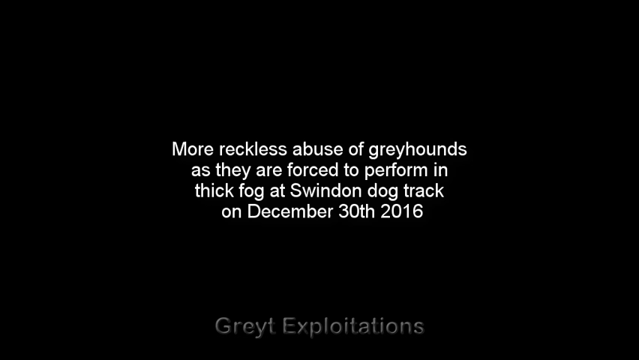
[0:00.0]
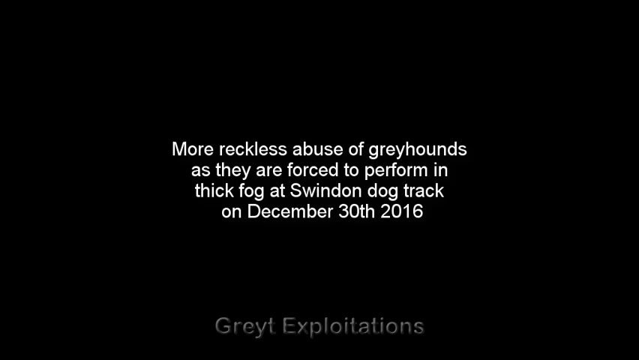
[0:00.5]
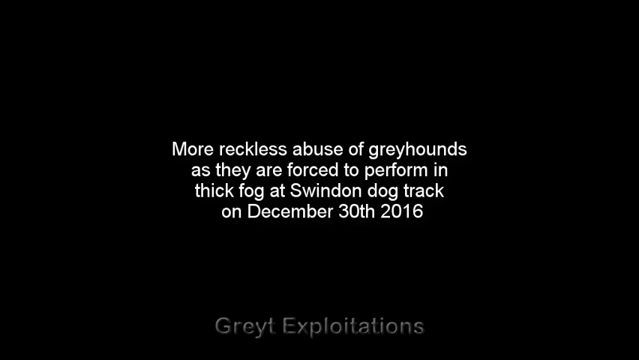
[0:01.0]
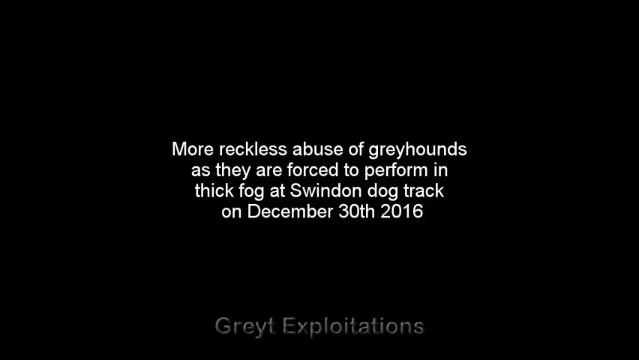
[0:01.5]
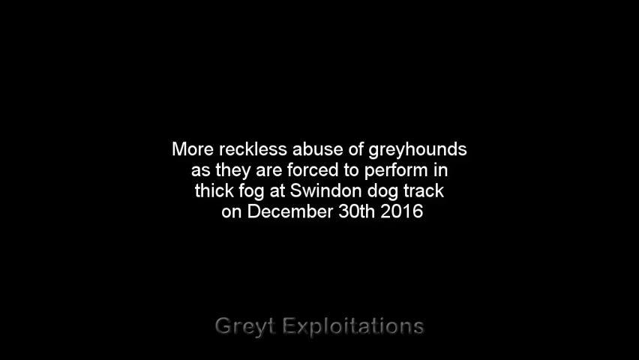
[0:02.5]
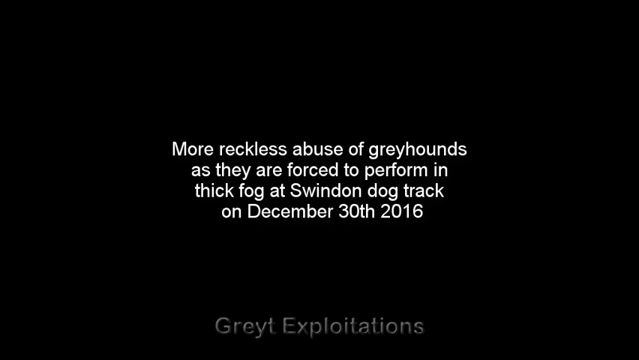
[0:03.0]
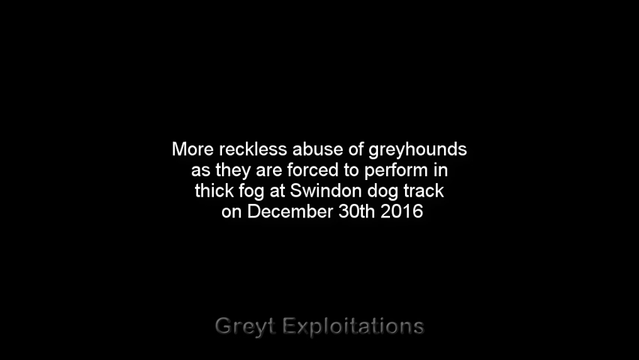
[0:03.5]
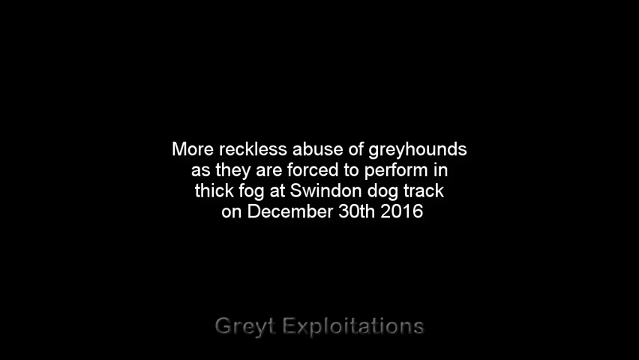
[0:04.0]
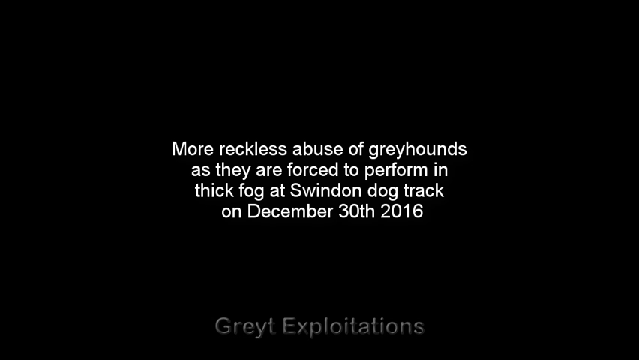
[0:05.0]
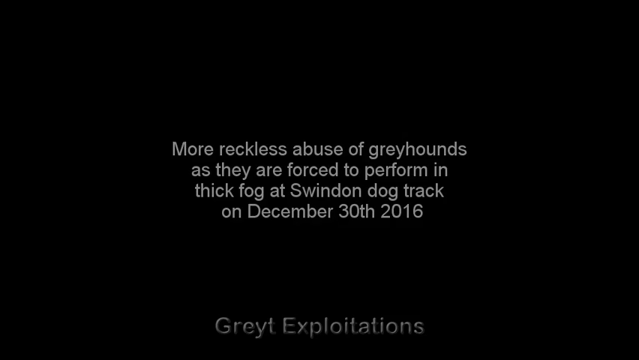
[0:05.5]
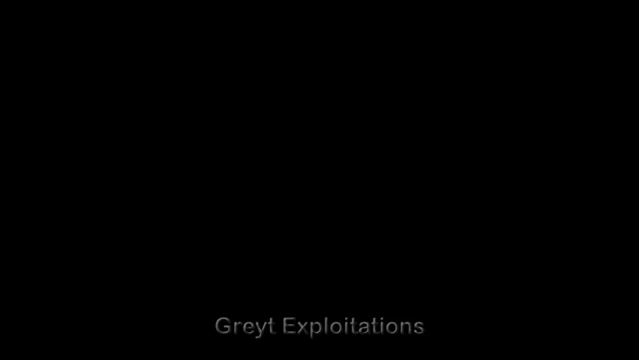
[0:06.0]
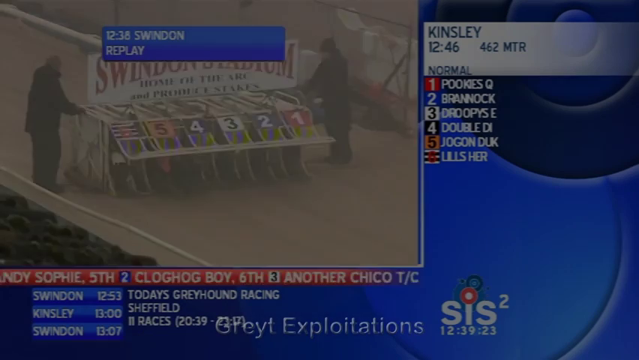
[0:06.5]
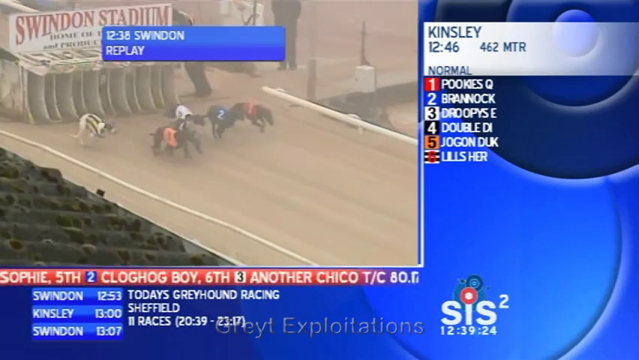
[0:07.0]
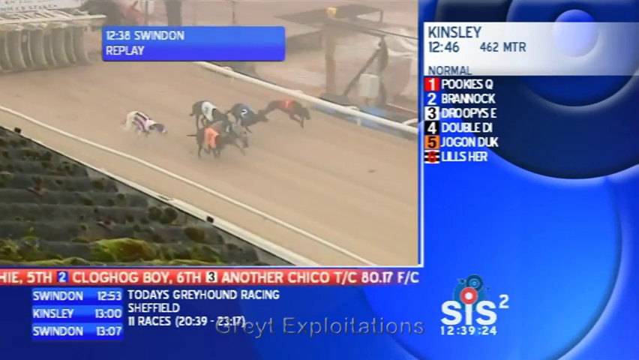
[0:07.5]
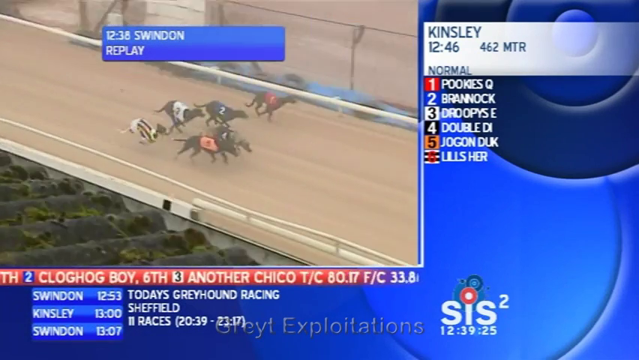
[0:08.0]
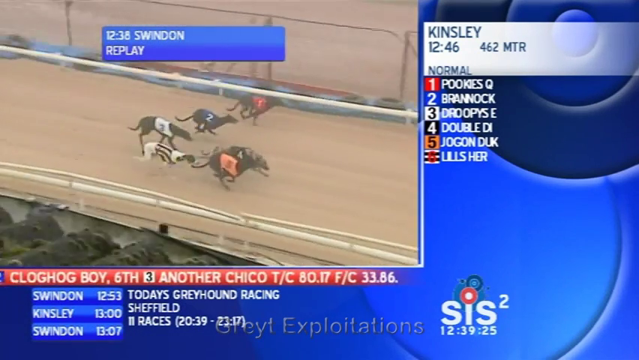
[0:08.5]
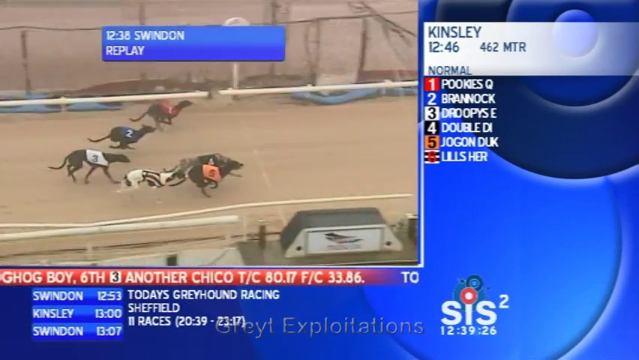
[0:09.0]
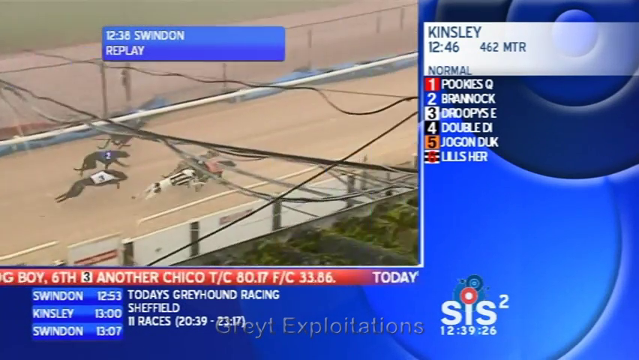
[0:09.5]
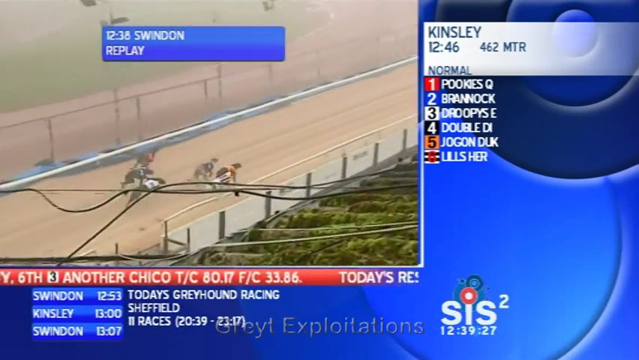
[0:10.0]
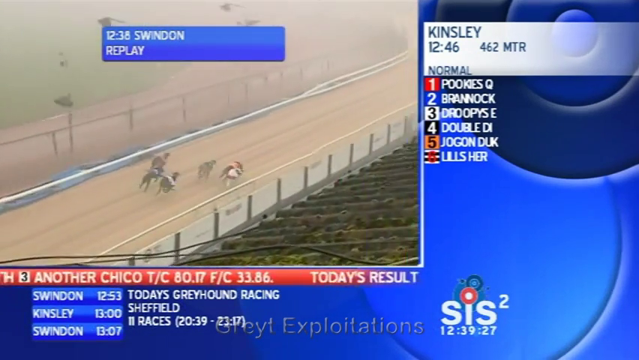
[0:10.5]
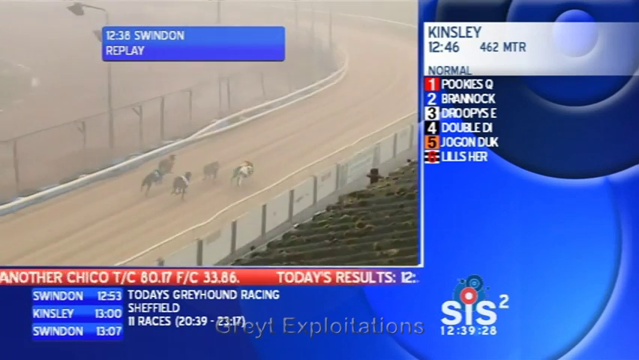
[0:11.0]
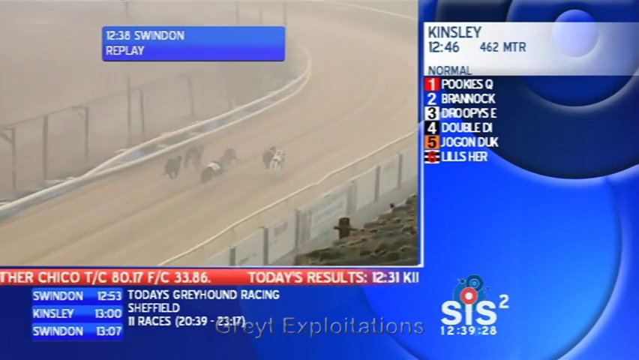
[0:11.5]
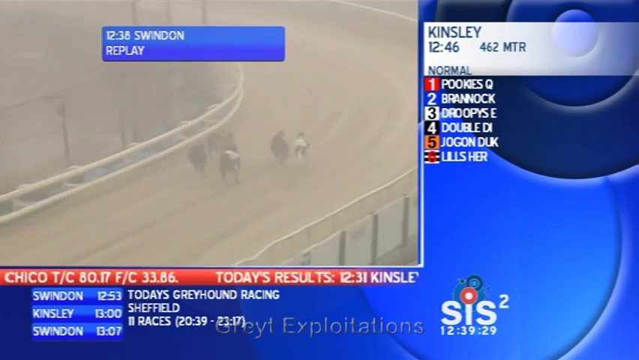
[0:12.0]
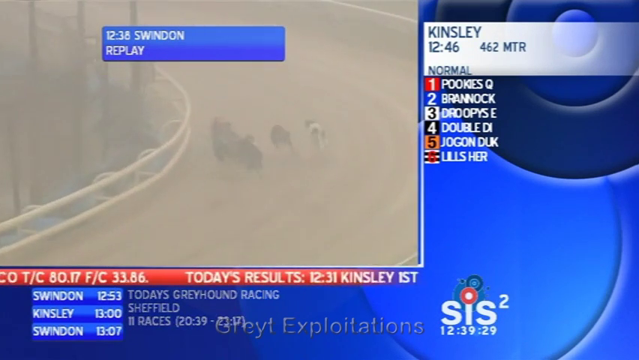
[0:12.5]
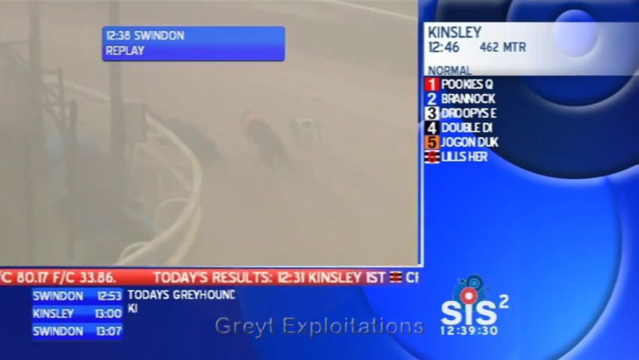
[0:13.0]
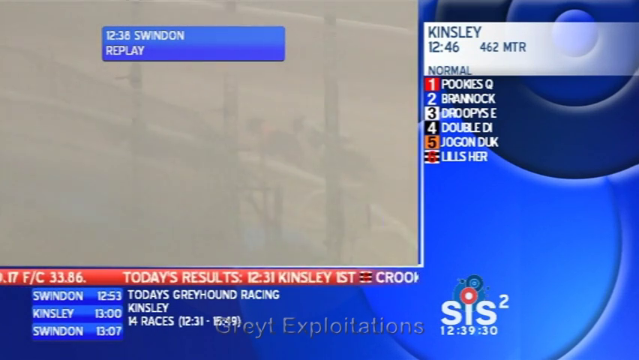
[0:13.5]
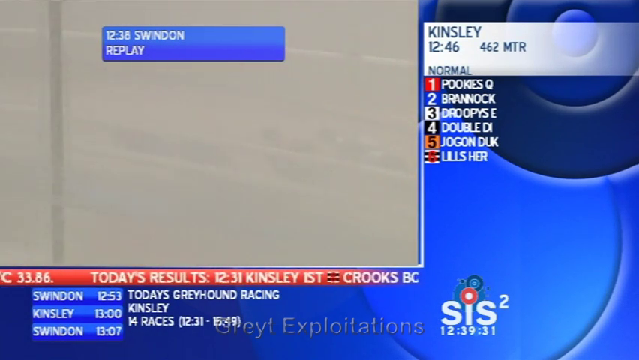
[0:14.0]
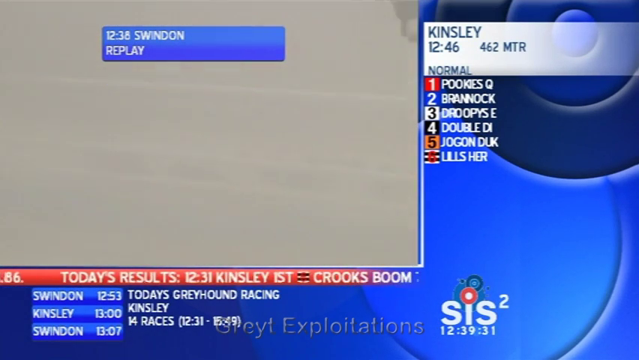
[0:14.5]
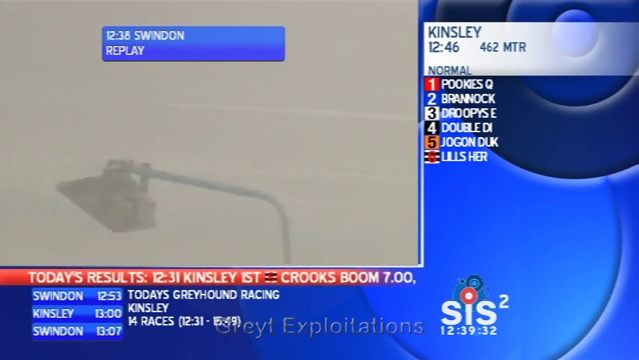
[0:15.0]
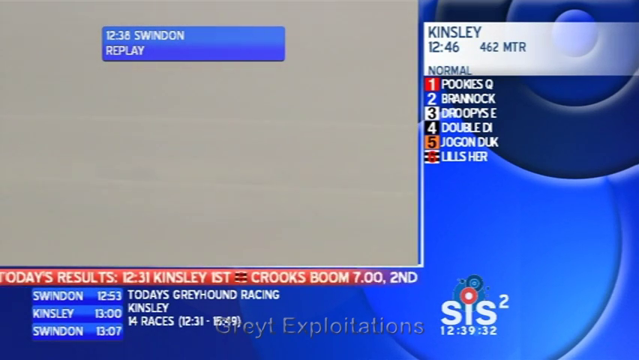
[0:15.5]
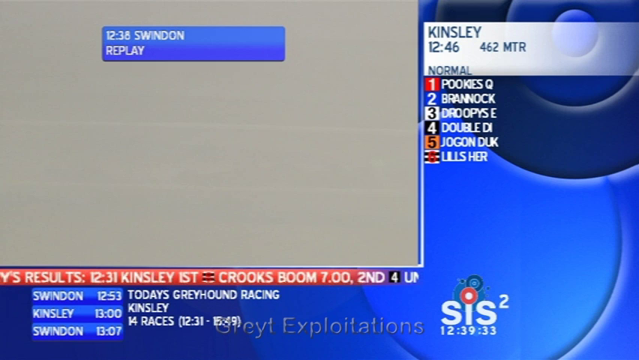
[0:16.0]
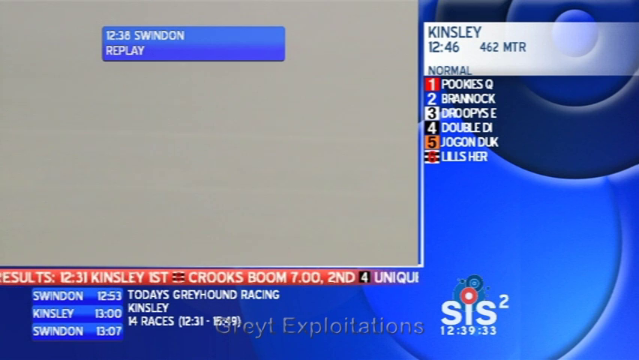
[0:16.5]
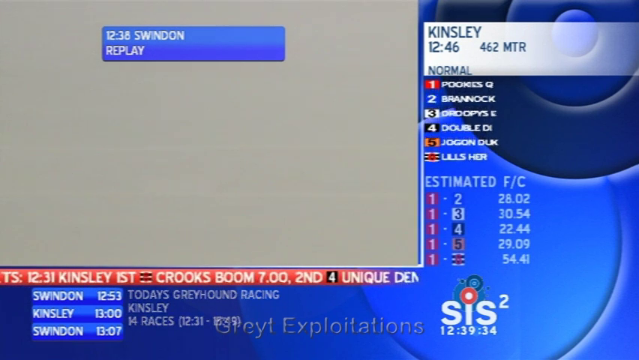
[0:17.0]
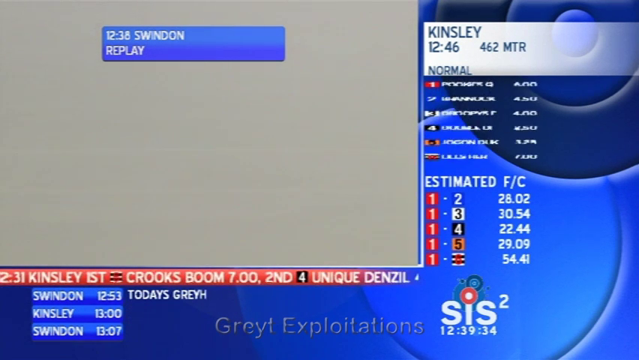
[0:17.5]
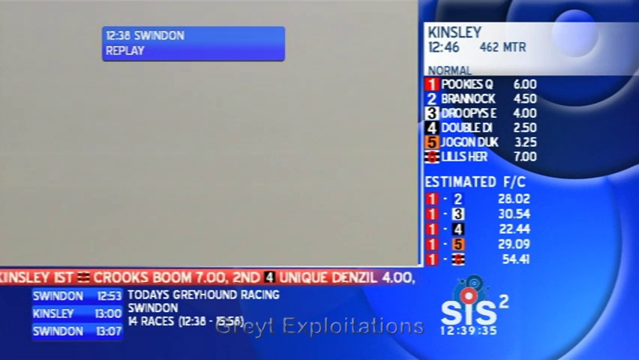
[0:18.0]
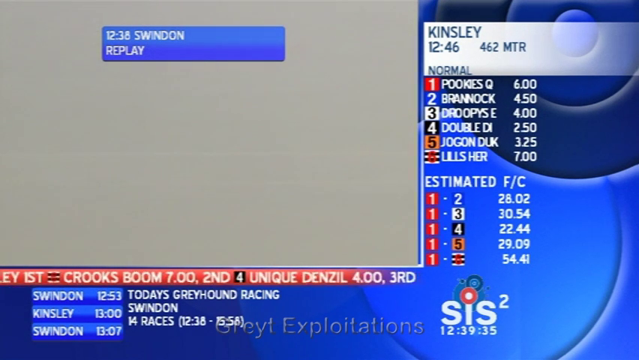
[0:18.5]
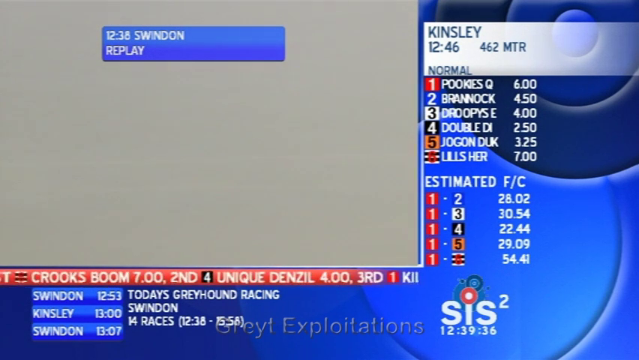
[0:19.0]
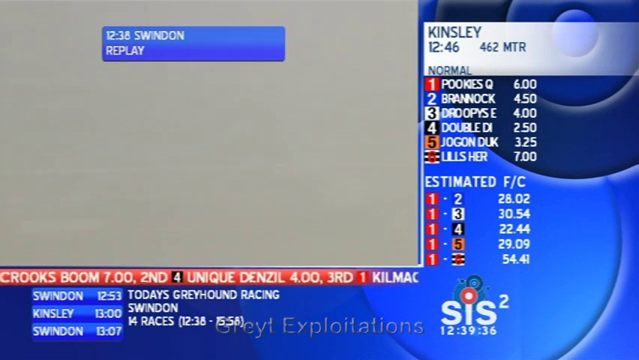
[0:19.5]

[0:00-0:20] The video opens with warning text on a black background about the reckless abuse of greyhounds forced to race at the Swindon Dog Track on December 30th, 2016. Race footage then plays in the left half of the screen, while the right-hand side shows the order of the greyhounds on a sort of blue background. Above the gate where the greyhounds start is Swindon Stadium. The roof of a house is in front of the camera. The greyhounds run very fast on a dirt track, each wearing a sort of separate little cover with a number on it, all in different colours. Electric wires go over the track, and the sort of dirt track disappears into the fog. As the dogs start rounding a corner it becomes increasingly difficult to see them; the camera turns the corner but cannot really pick up the dogs in the fog. The screen also says "replay".